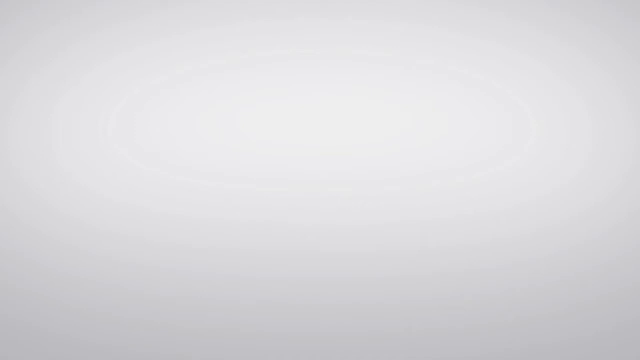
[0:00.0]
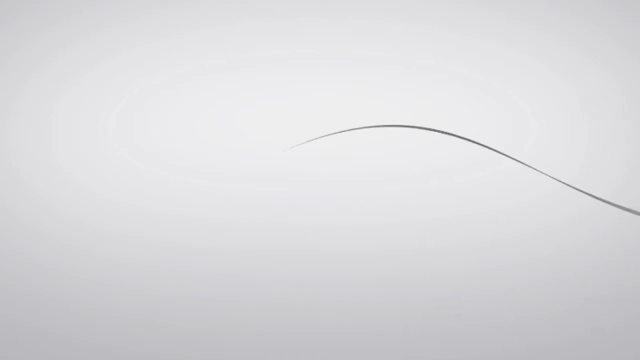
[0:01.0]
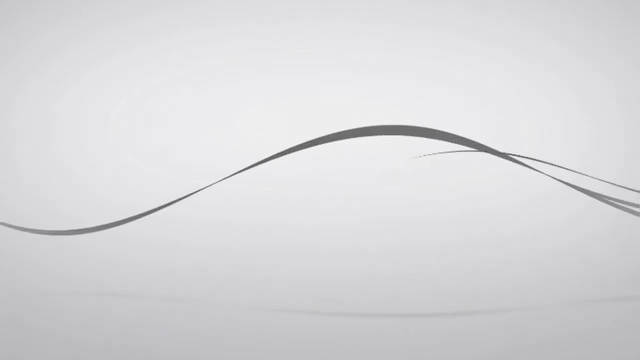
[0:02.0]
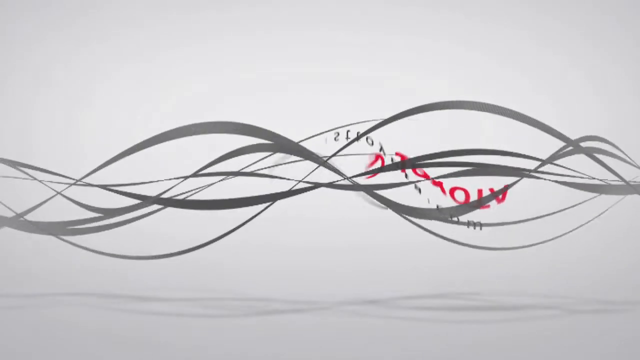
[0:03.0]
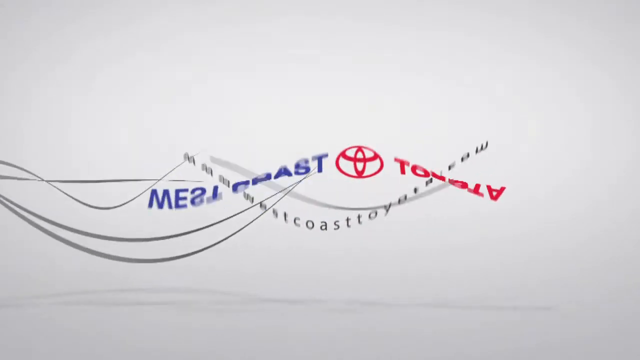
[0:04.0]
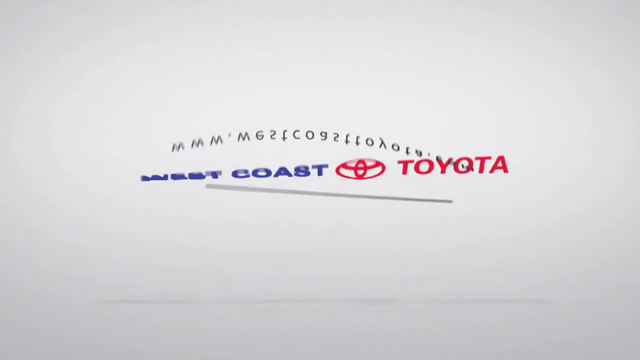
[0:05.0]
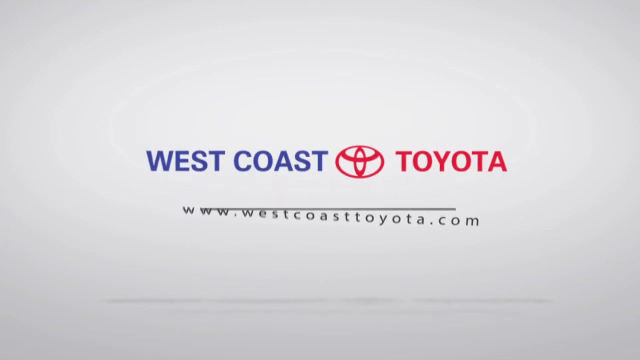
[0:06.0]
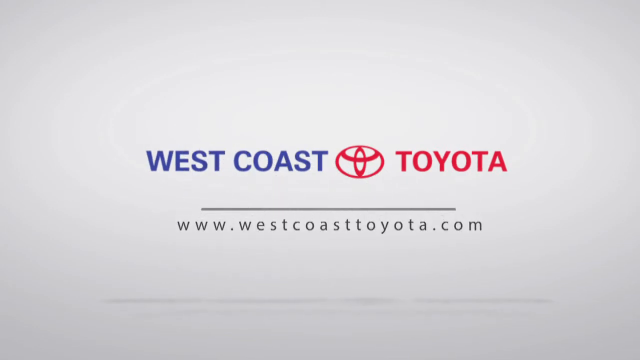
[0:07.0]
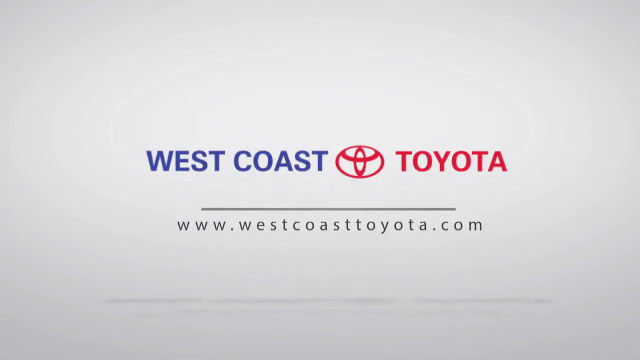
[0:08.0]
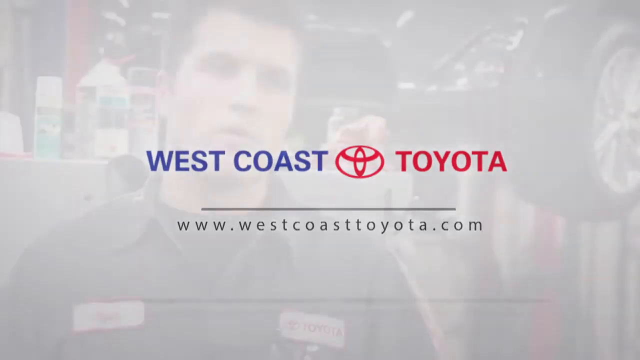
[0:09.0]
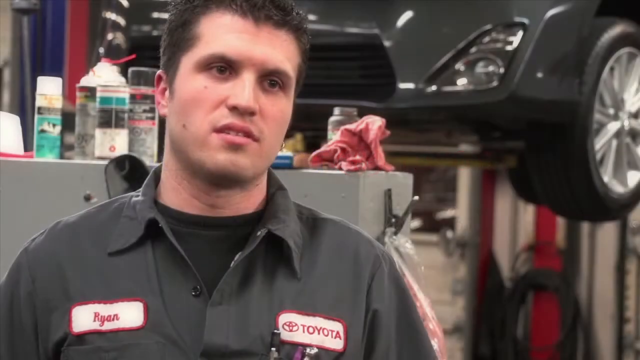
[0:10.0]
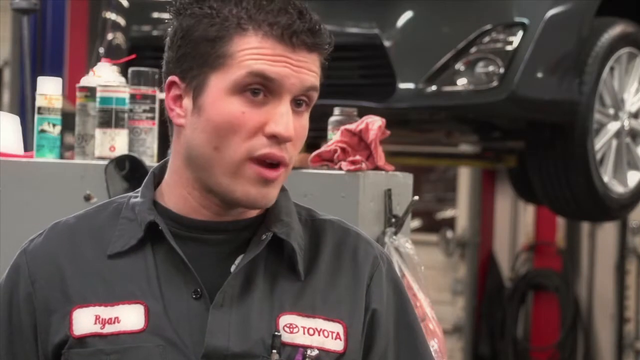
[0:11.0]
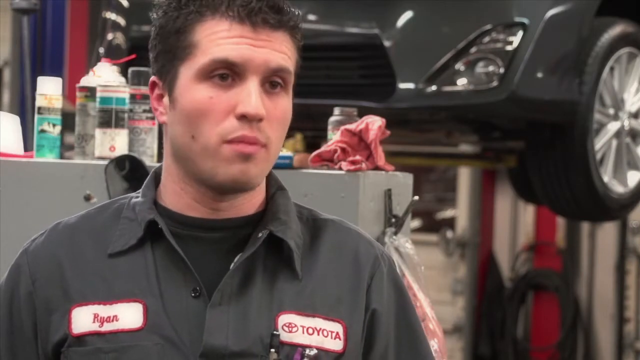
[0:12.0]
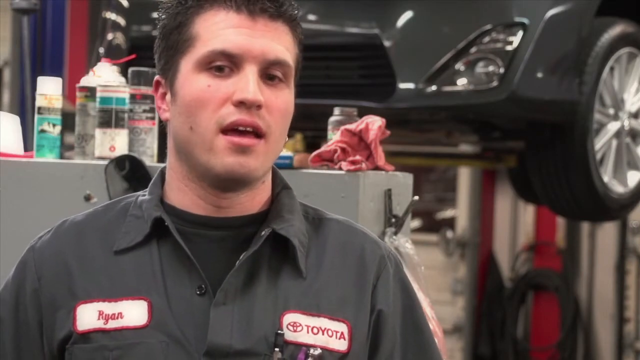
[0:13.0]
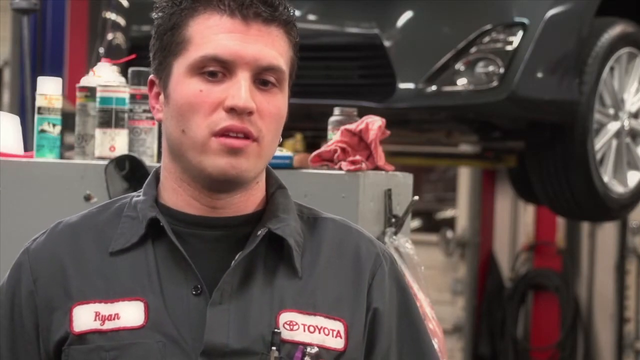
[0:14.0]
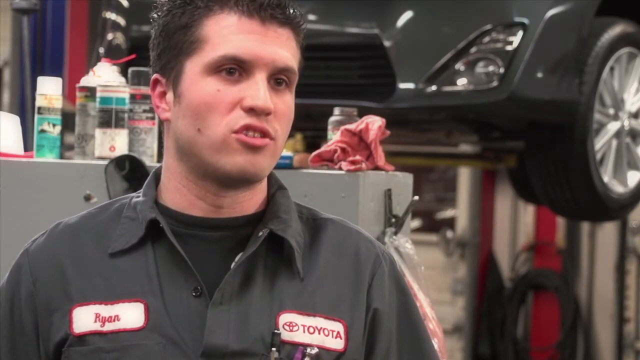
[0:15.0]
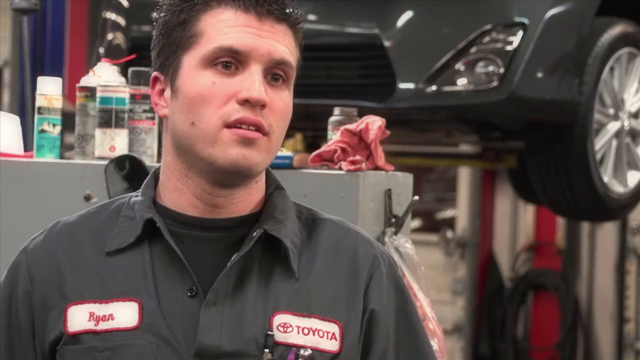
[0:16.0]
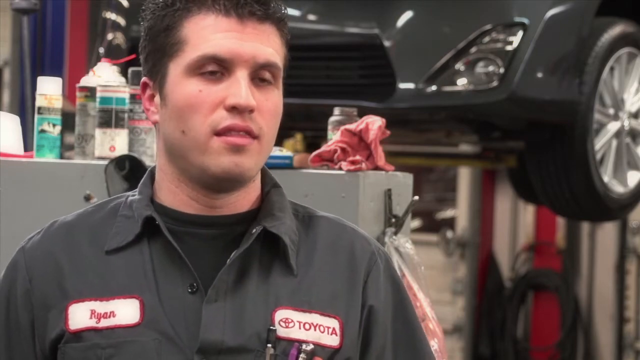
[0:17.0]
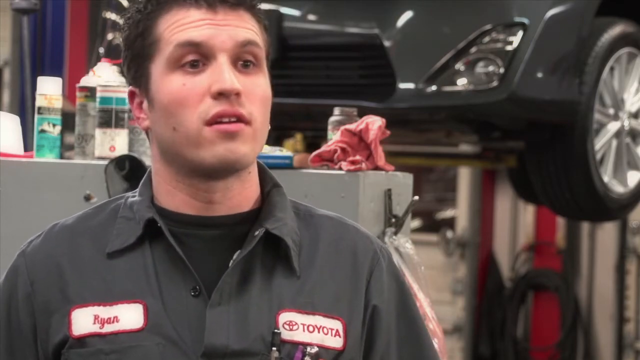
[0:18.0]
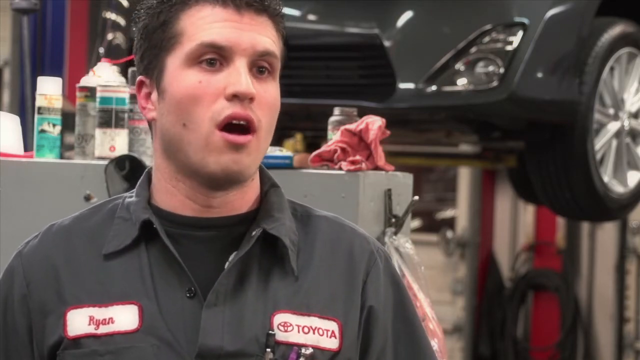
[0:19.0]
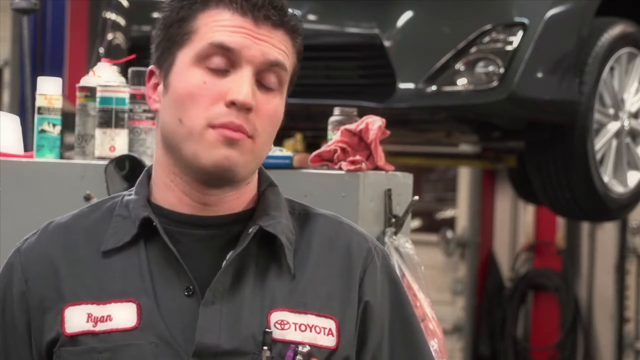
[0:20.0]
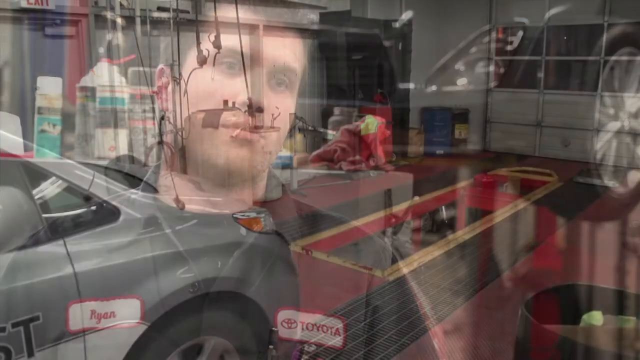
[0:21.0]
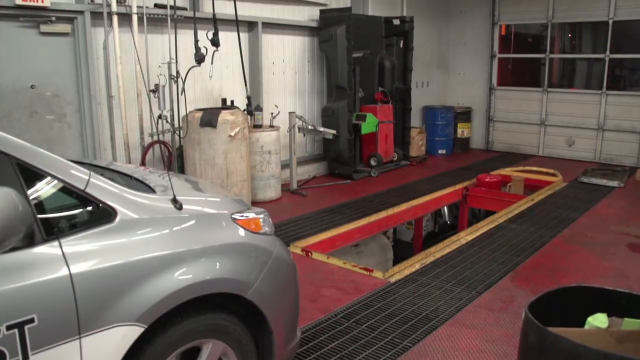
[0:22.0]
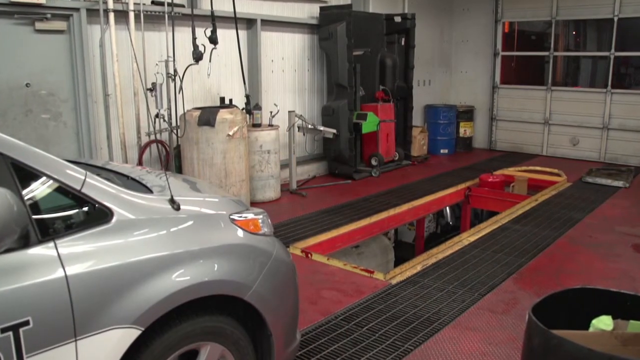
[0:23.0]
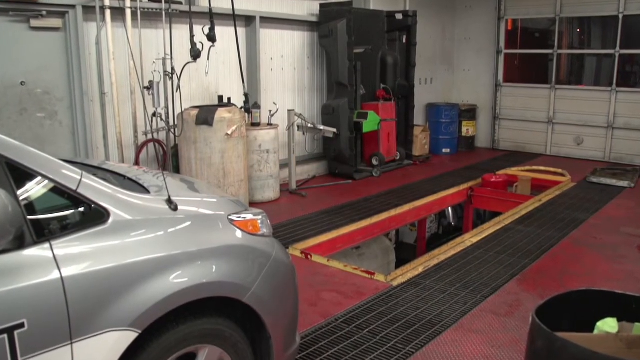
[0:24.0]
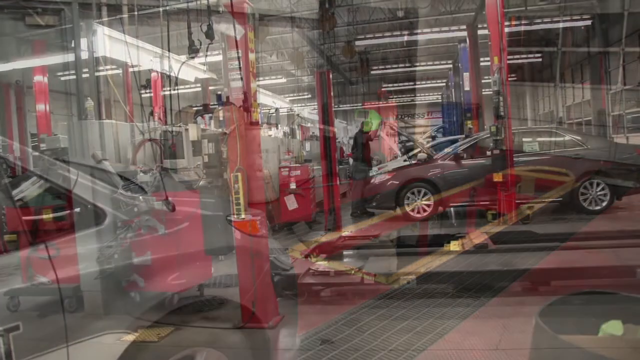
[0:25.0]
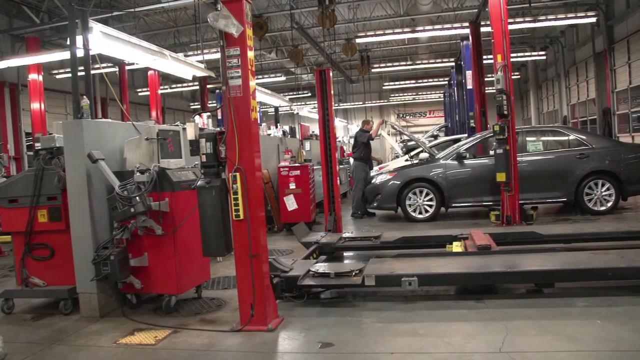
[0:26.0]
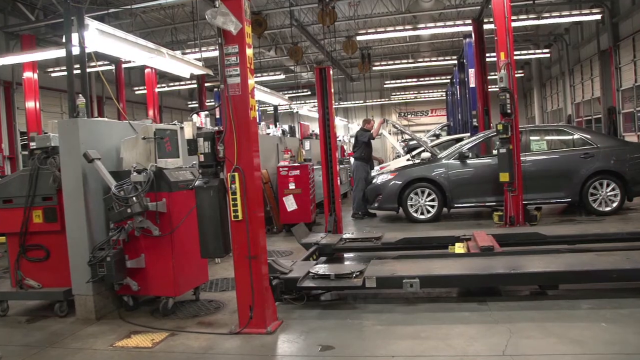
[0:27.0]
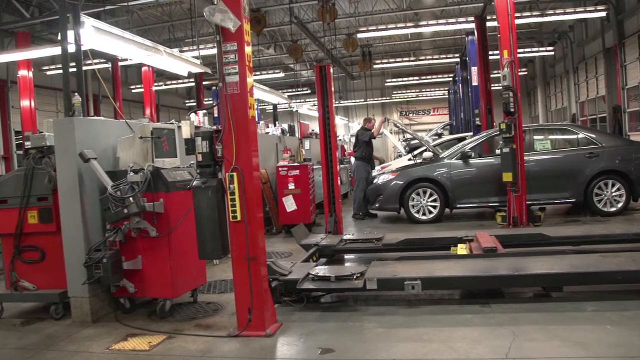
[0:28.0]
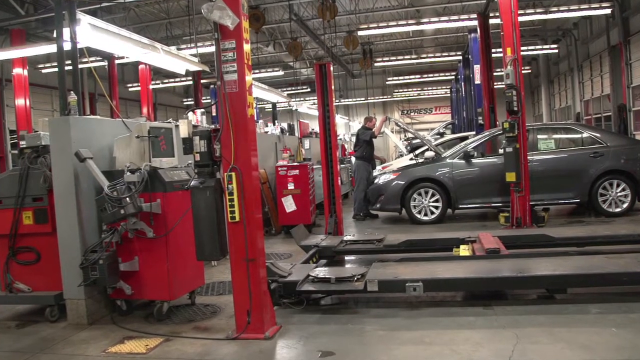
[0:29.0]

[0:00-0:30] The video opens with an intro featuring swirling lines that reads "west coast toyota," with a red Toyota sign in the middle between the two words. Below it reads "www.westcoasttoyota.com." The text is on a white background with a black line above it. It then cuts to a man talking to the camera as he is being interviewed; he looks like he works in a car shop. His gray shirt has a name tag on the right side reading "ryan" and a tag on the left side reading "toyota." He has black hair and is clean-shaven. Behind him, a black car is elevated off the ground, and there is a cabinet with a towel on top of it. The video then cuts to a work area in a repair shop where a gray car is waiting to be worked on.